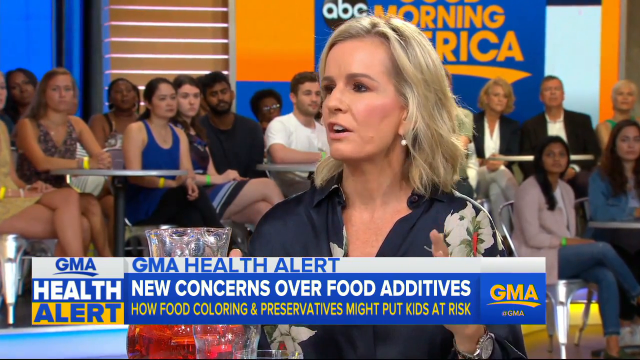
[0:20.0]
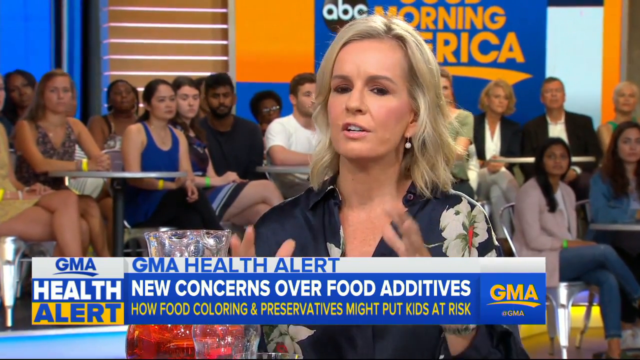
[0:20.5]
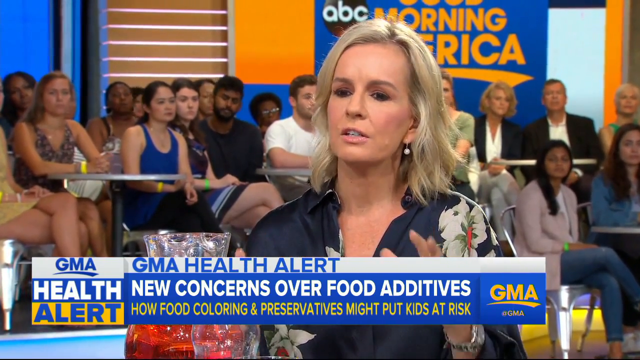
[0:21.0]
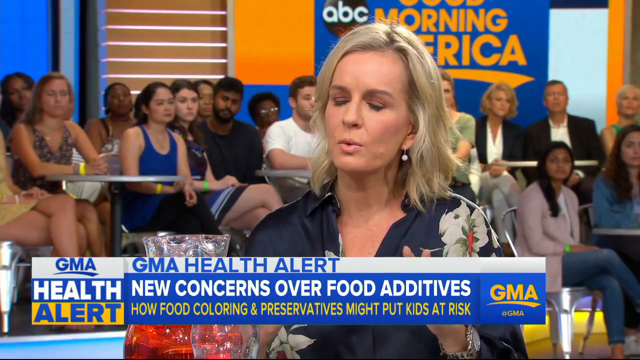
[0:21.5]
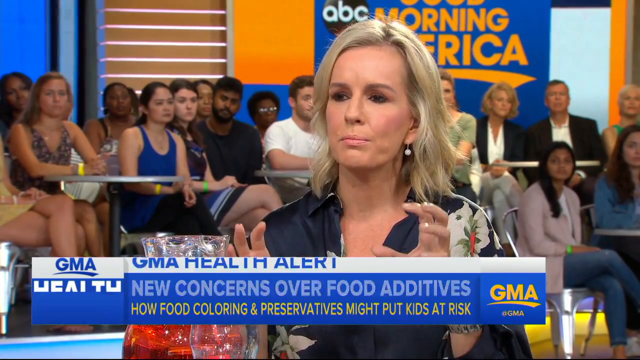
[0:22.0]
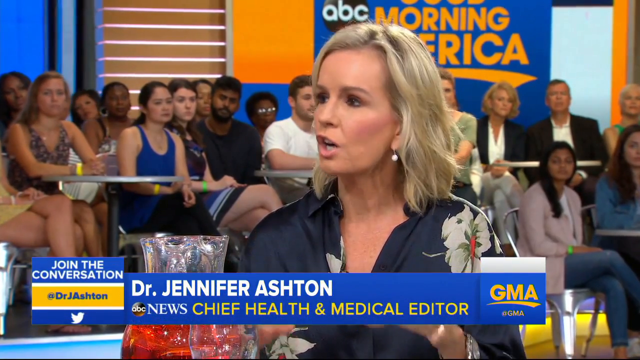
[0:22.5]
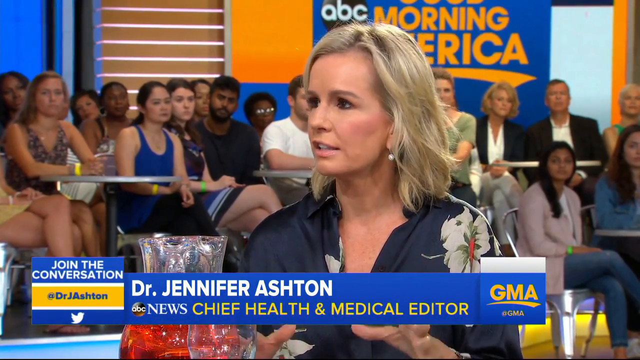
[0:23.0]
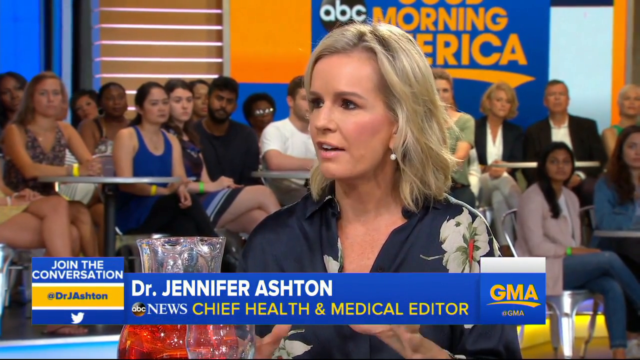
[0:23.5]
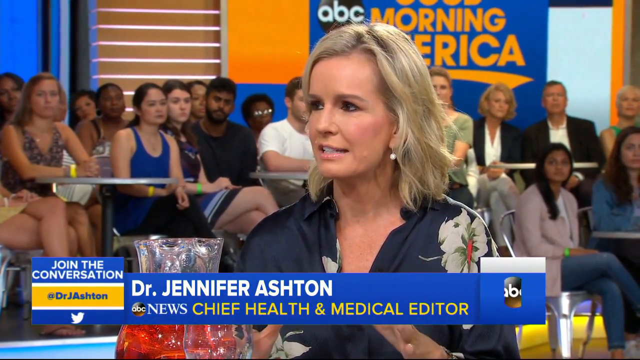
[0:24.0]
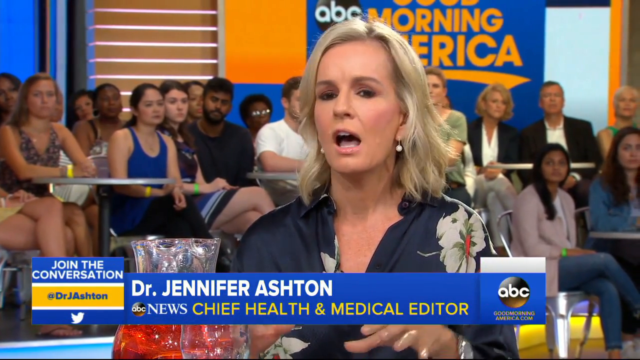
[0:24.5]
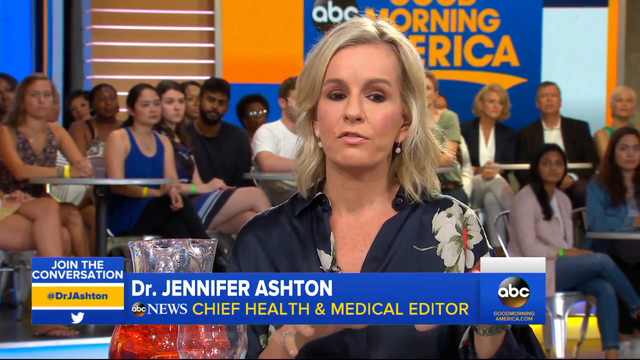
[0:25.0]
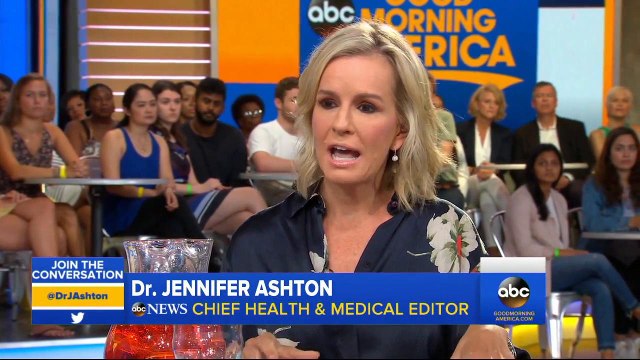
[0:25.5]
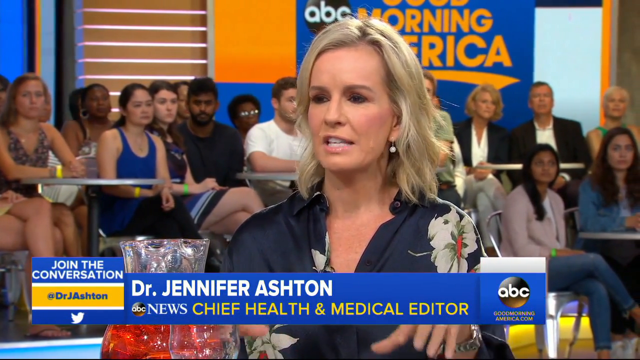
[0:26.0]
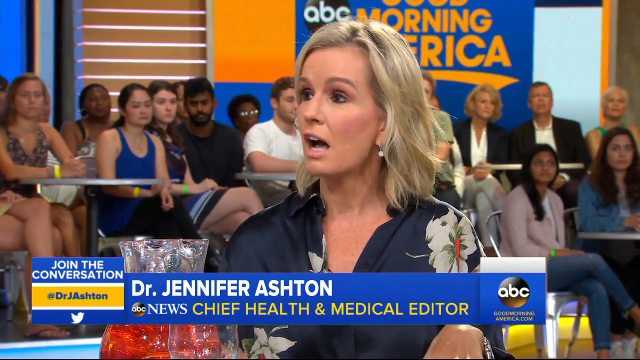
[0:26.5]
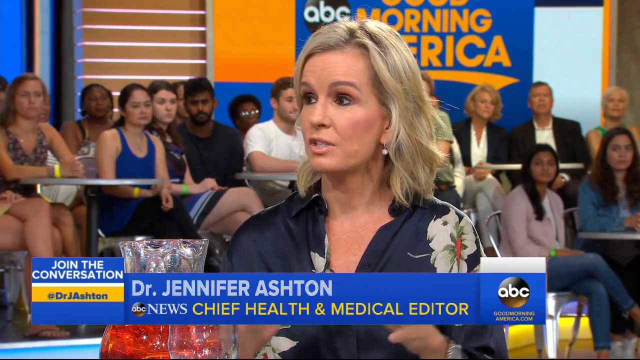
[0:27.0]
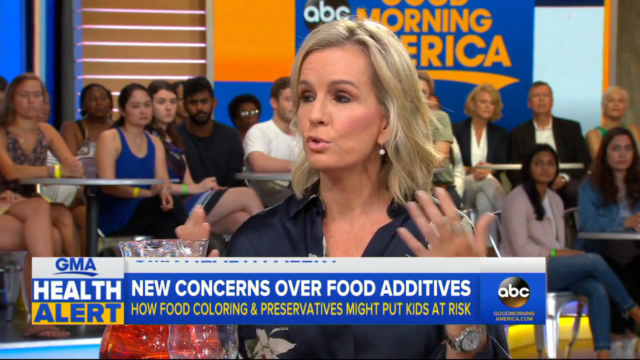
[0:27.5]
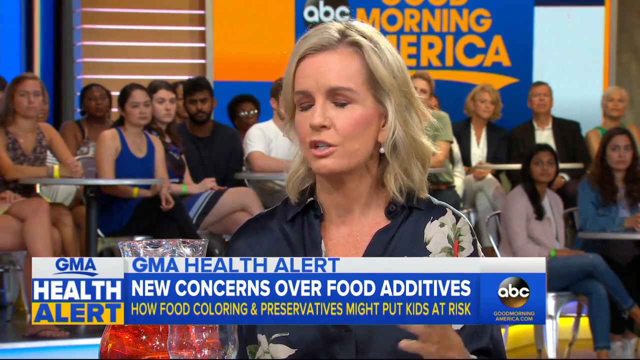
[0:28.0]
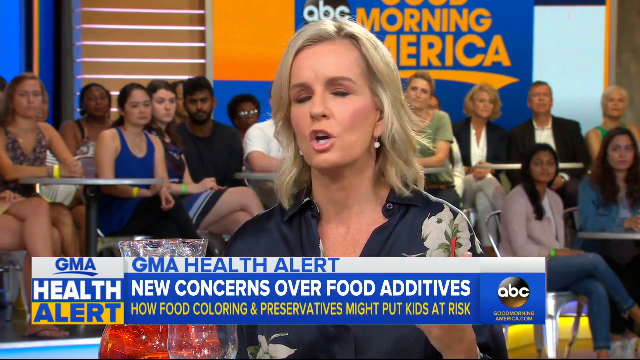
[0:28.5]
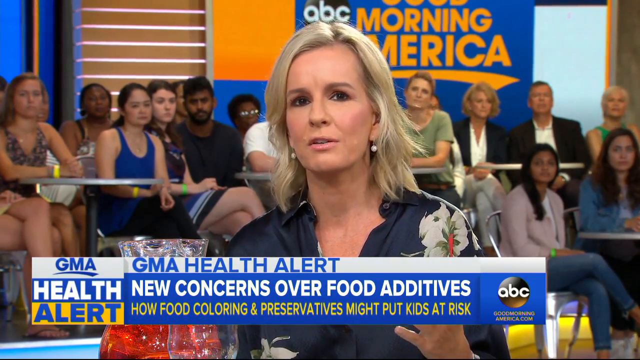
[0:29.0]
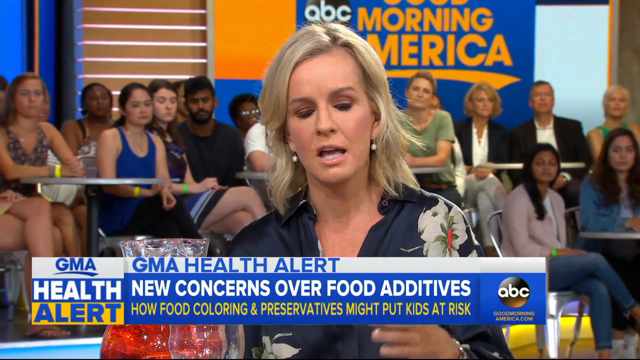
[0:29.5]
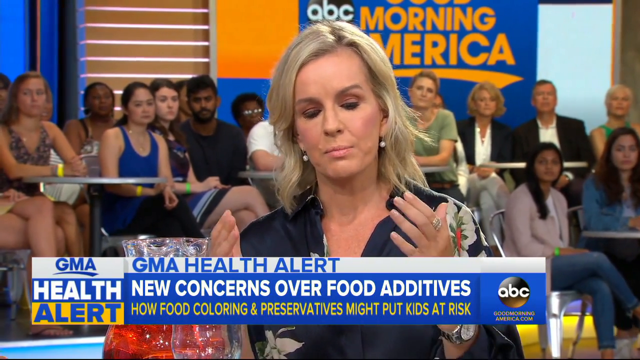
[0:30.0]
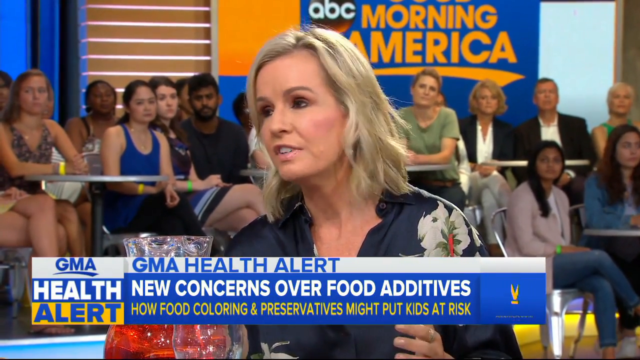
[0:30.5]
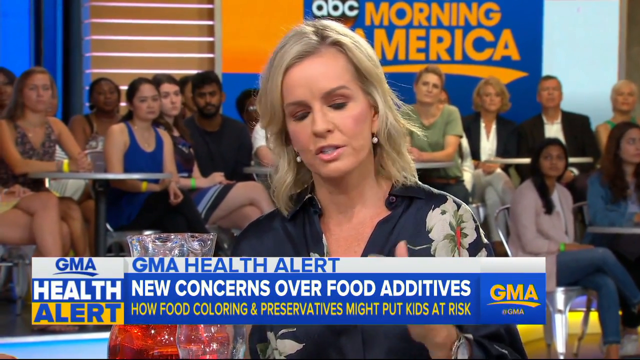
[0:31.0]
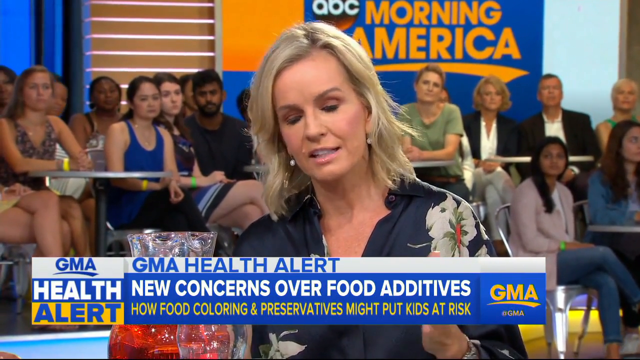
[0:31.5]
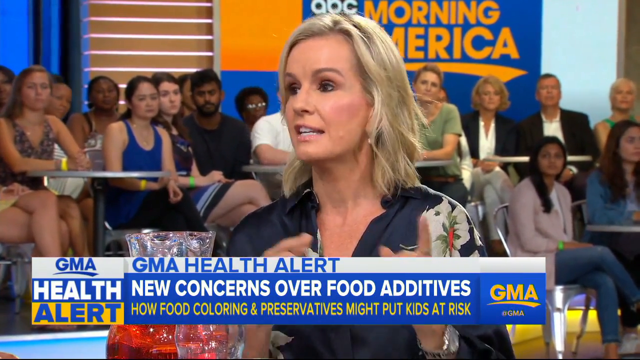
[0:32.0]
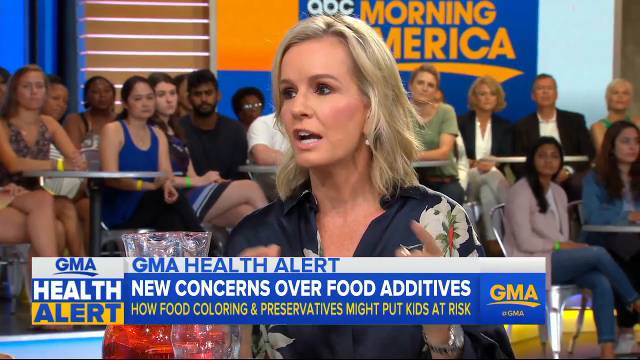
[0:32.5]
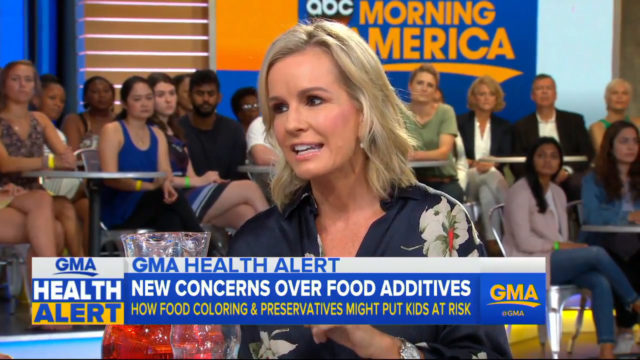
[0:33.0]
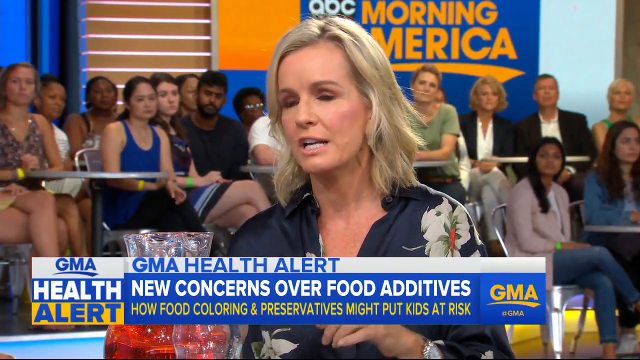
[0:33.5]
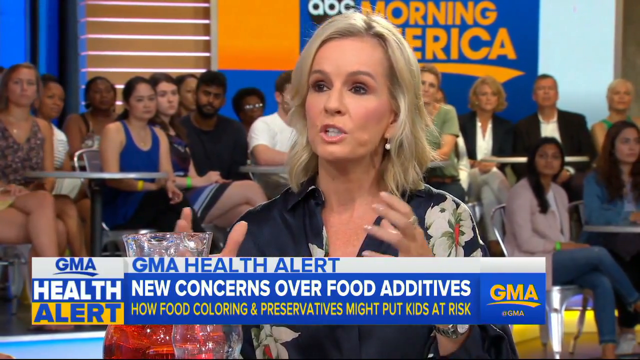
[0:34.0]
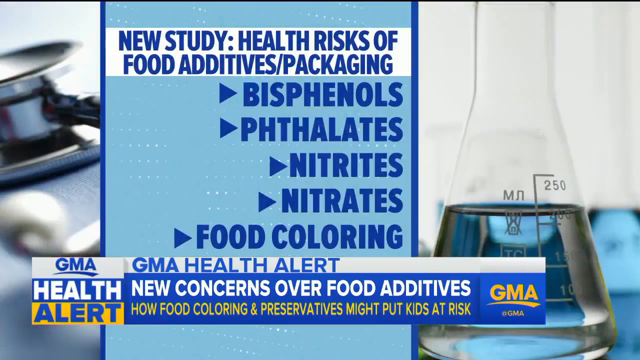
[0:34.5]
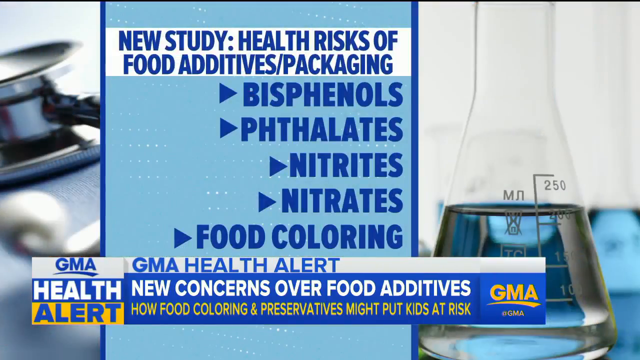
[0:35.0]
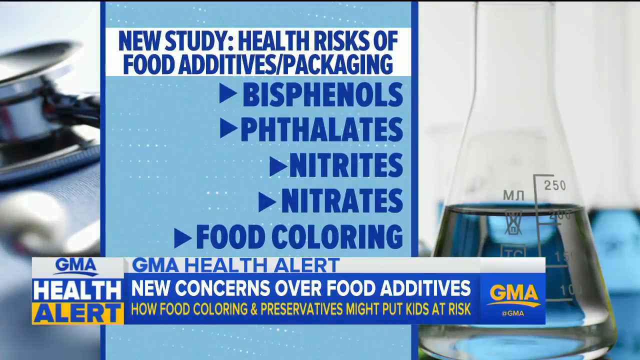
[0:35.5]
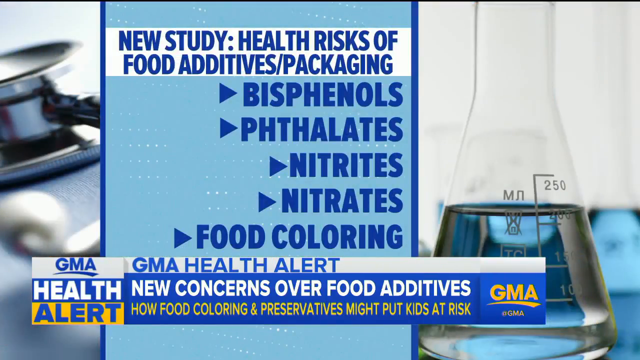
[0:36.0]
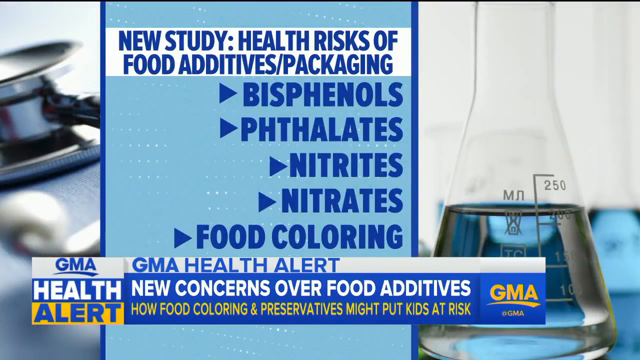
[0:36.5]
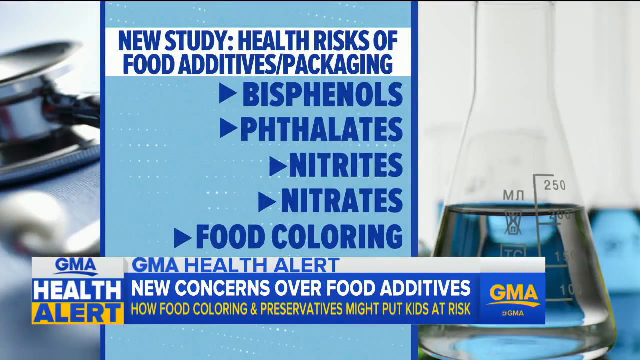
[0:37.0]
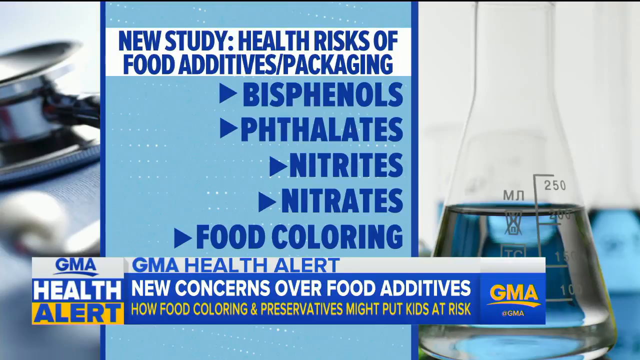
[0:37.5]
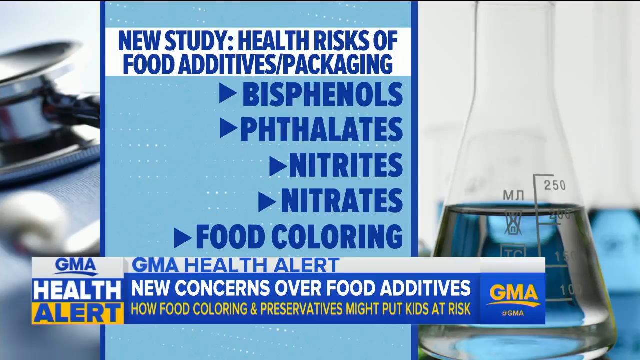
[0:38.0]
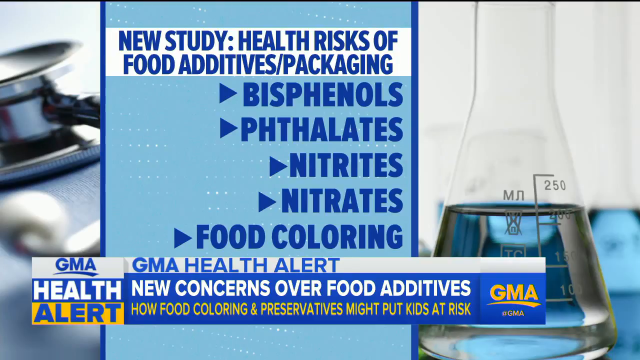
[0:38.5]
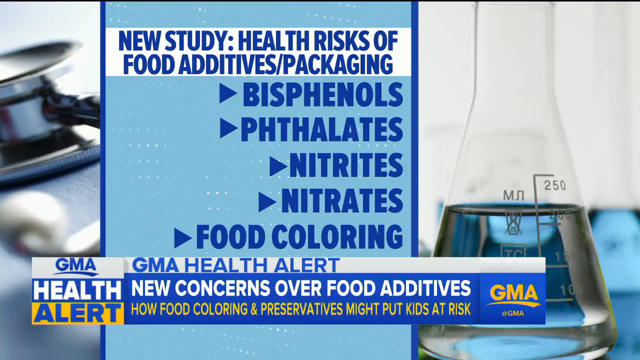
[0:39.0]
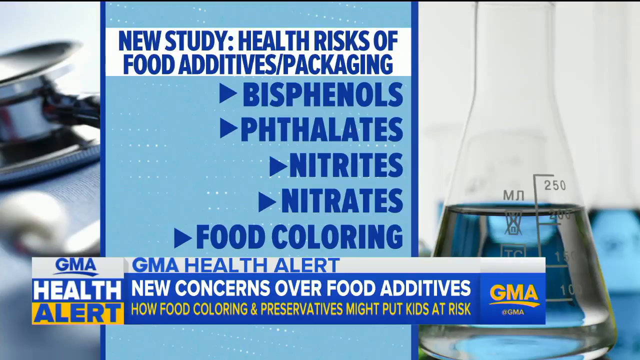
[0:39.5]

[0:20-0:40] The shot is on the blonde-haired woman in the studio, with lots of people sat at tables listening in the background. The GMA health alert text at the bottom of the screen reads "new concerns over food additives, how food colouring and preservatives might put kids at risk." As she talks, her name flashes up: "Dr Jennifer Ashton, Chief Health and Medical Editor for ABC News." She talks animatedly and wears white pearl-type dangling earrings and a black top with white, green and pink flowers on it. The video then cuts to a screen with a chemical beaker containing some liquid on the right-hand side and blue text reading "new study health risks of food additives packaging bisphenols", followed by "nitrates nitrites and food colouring".